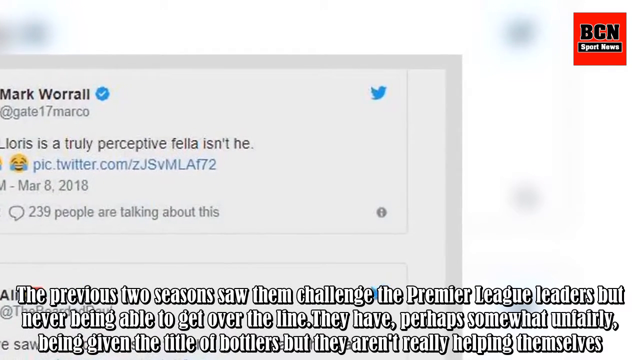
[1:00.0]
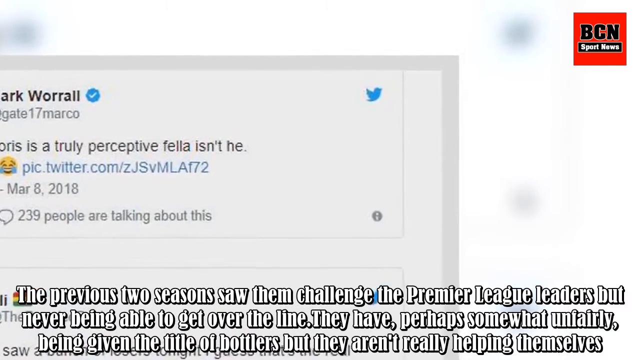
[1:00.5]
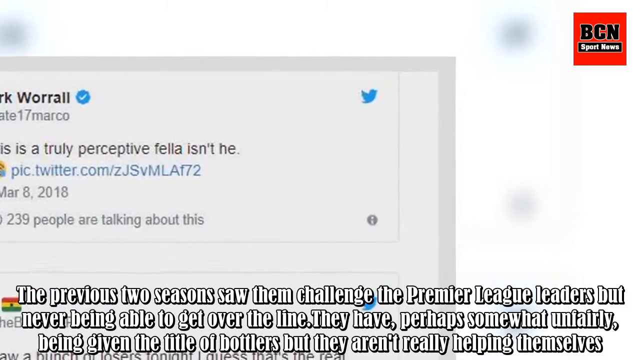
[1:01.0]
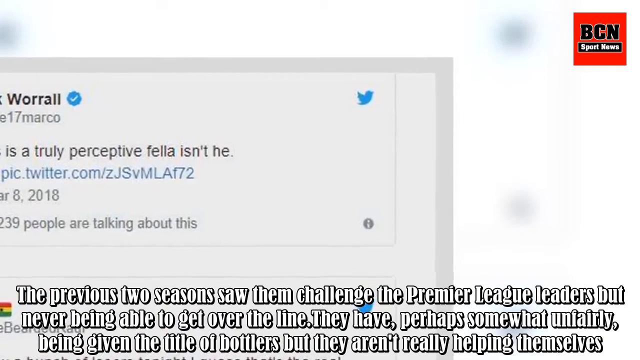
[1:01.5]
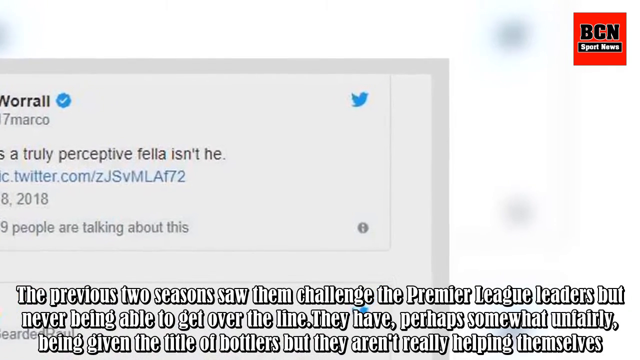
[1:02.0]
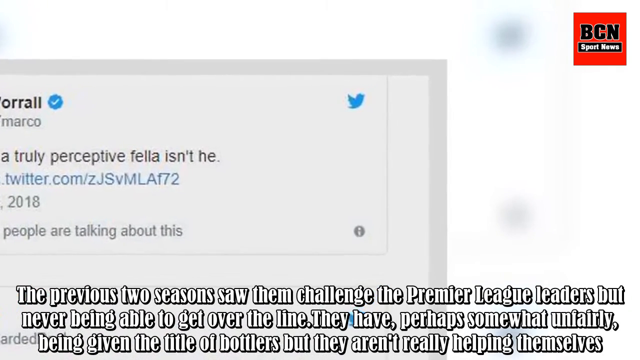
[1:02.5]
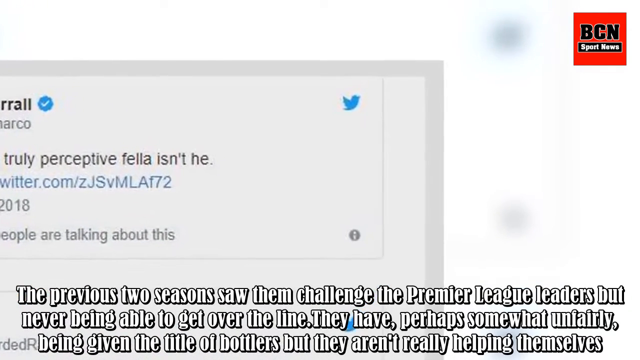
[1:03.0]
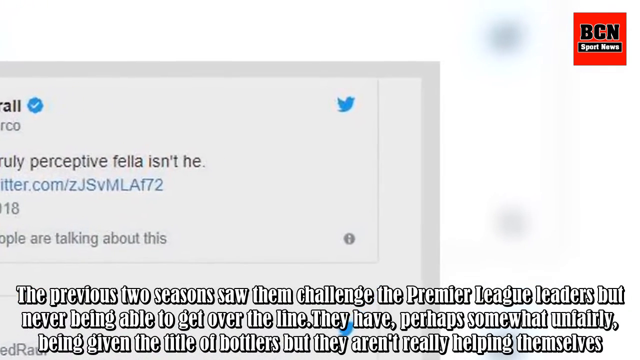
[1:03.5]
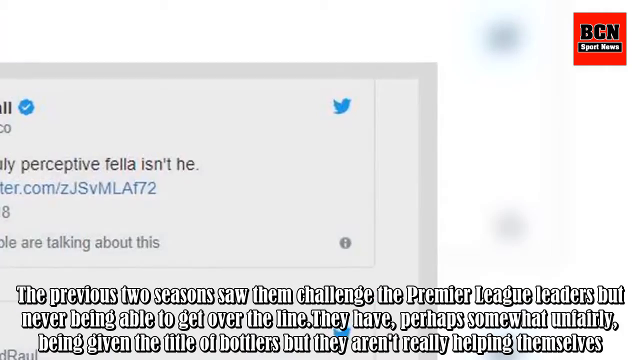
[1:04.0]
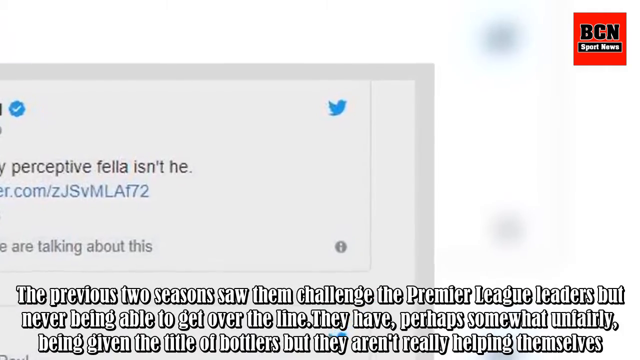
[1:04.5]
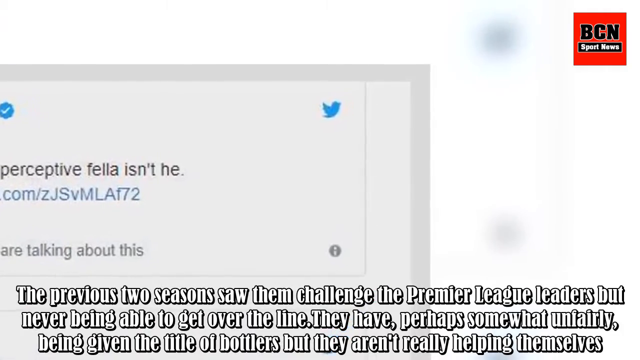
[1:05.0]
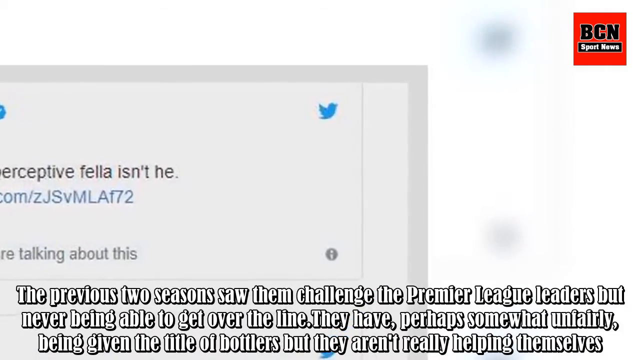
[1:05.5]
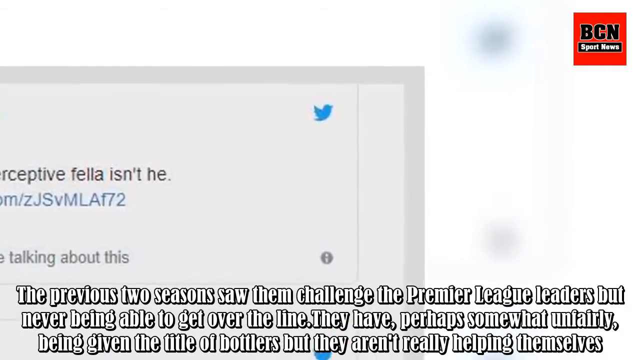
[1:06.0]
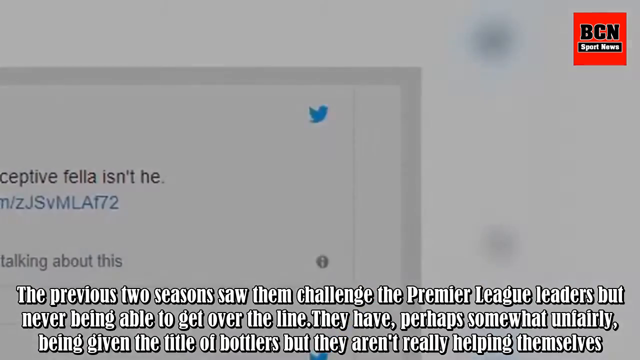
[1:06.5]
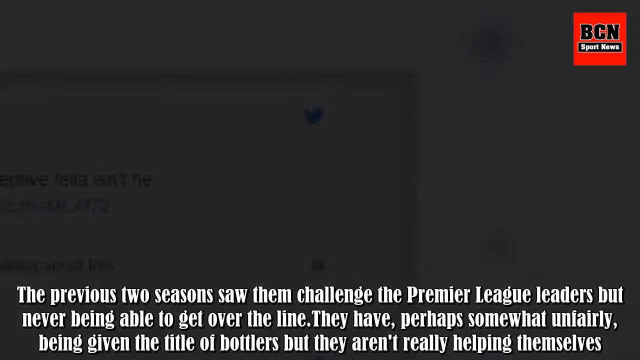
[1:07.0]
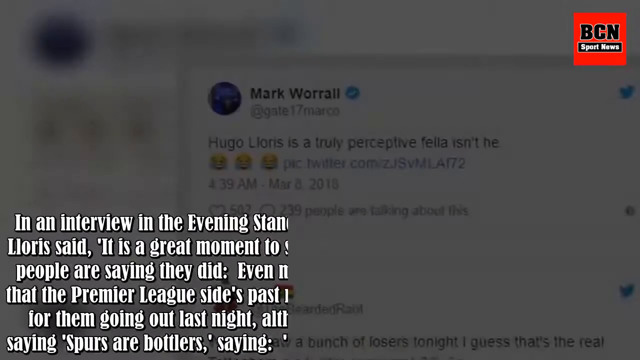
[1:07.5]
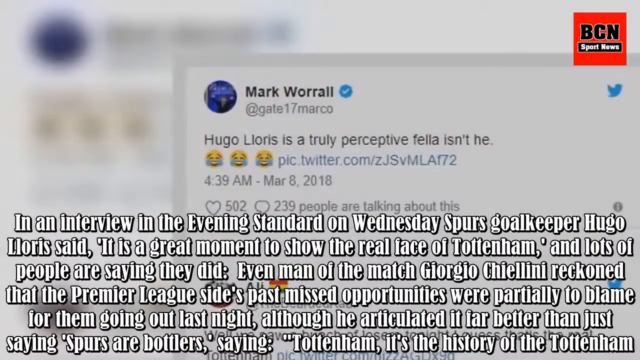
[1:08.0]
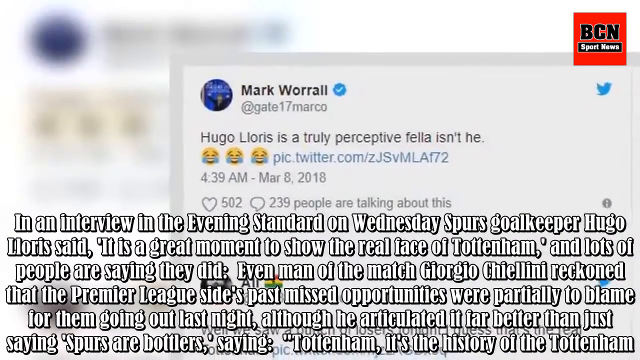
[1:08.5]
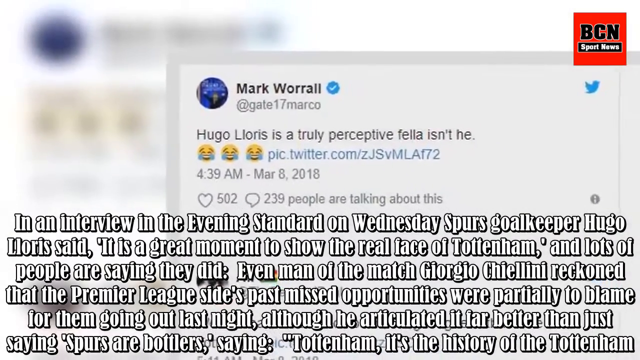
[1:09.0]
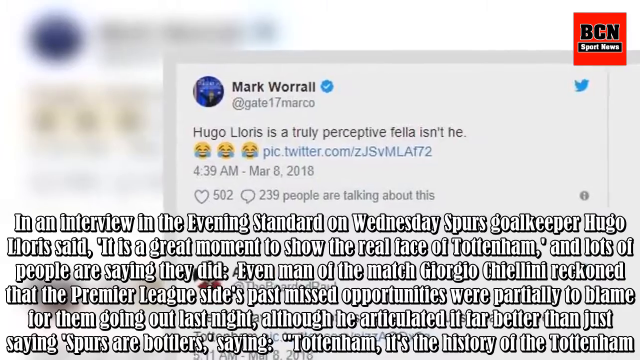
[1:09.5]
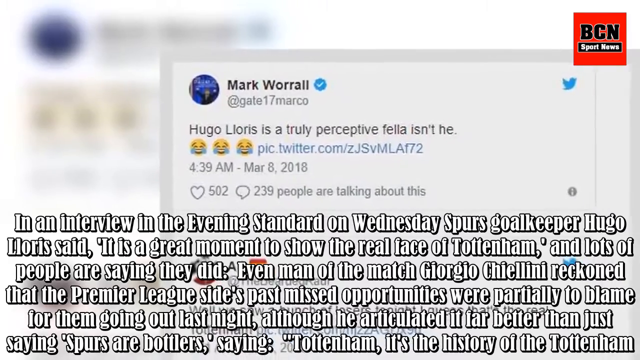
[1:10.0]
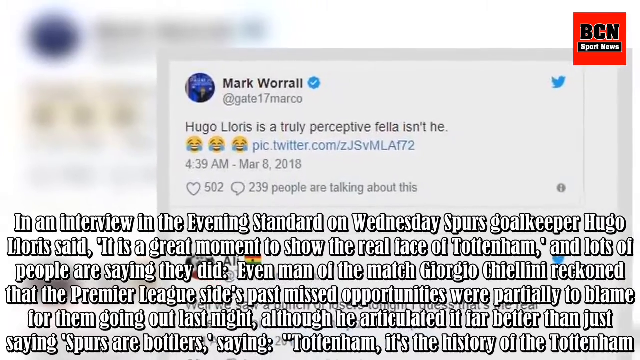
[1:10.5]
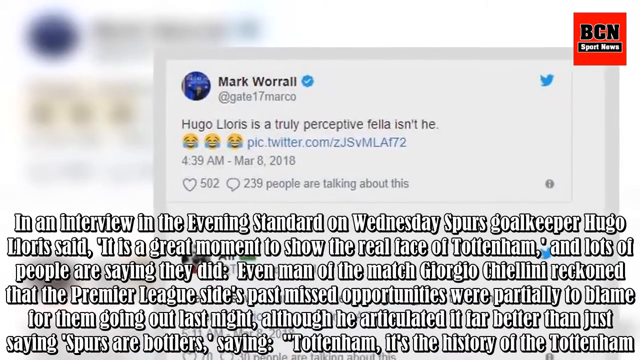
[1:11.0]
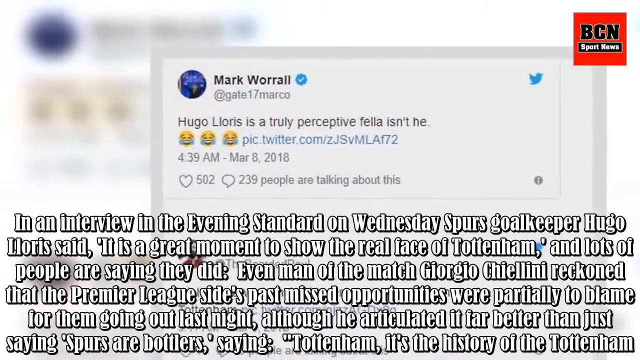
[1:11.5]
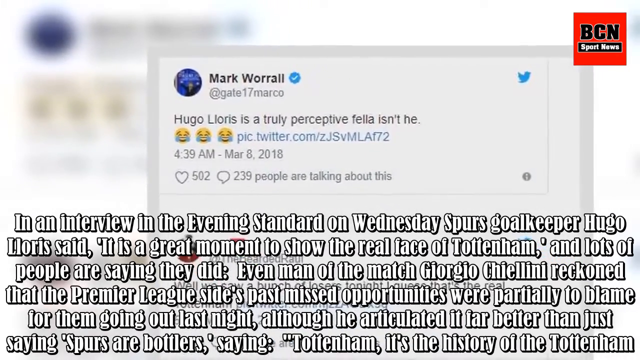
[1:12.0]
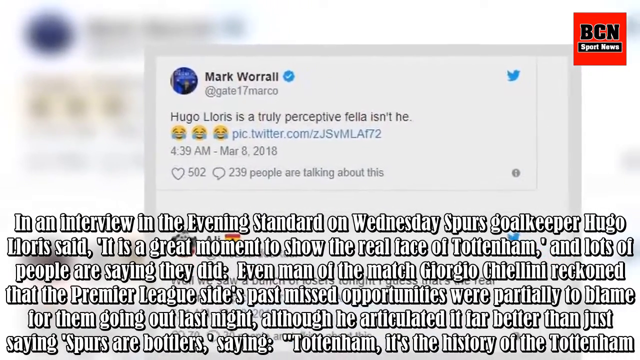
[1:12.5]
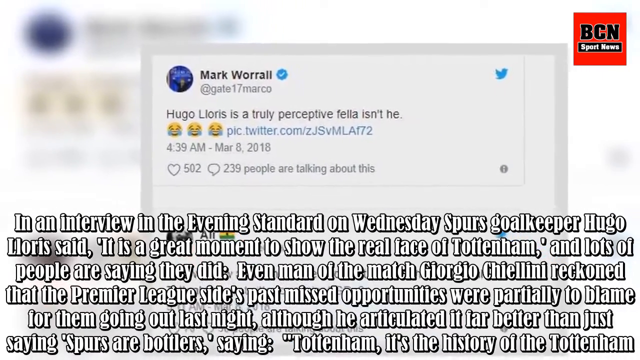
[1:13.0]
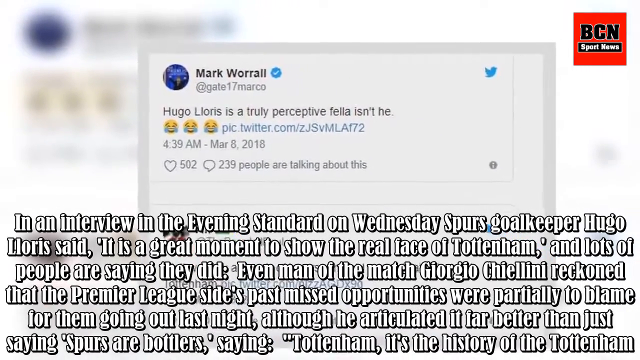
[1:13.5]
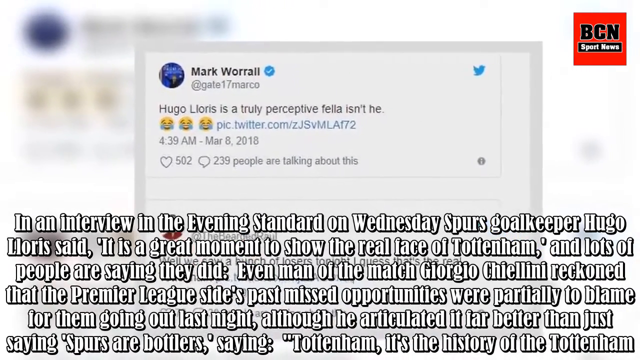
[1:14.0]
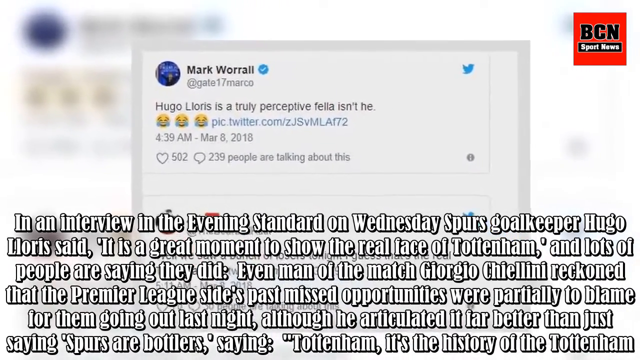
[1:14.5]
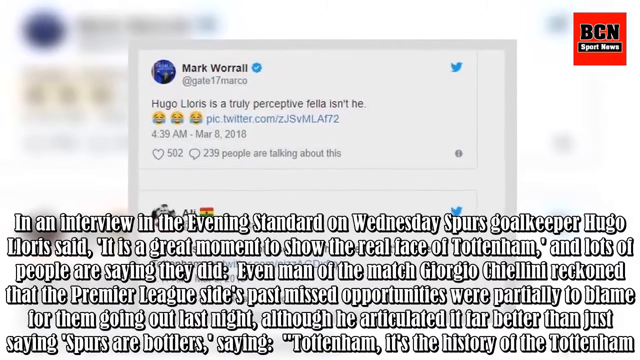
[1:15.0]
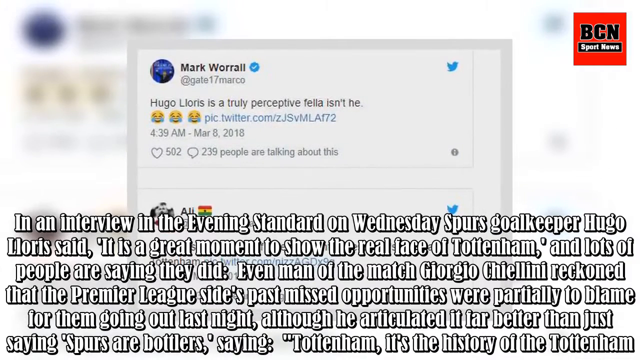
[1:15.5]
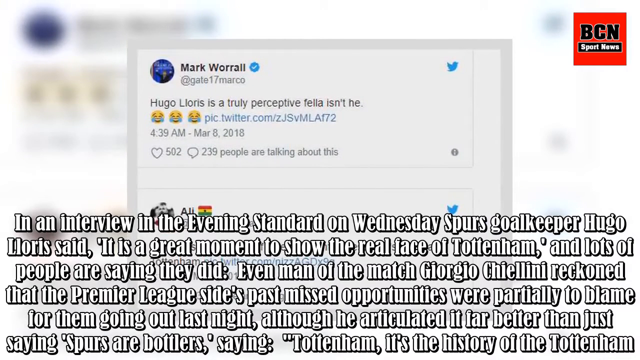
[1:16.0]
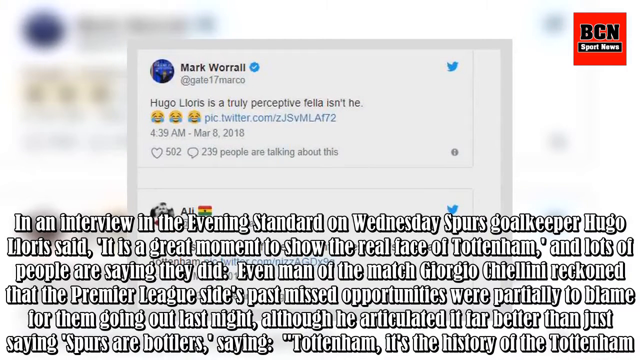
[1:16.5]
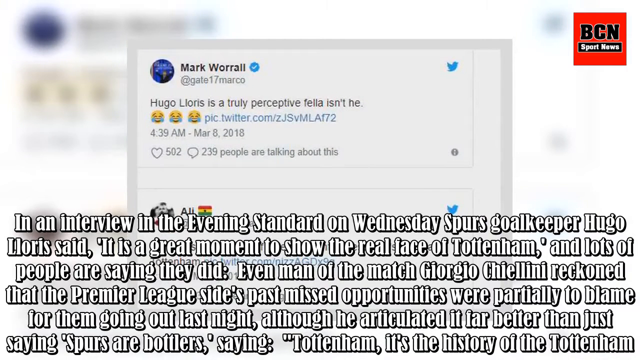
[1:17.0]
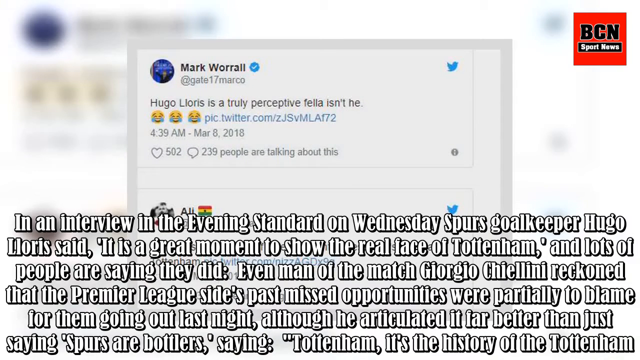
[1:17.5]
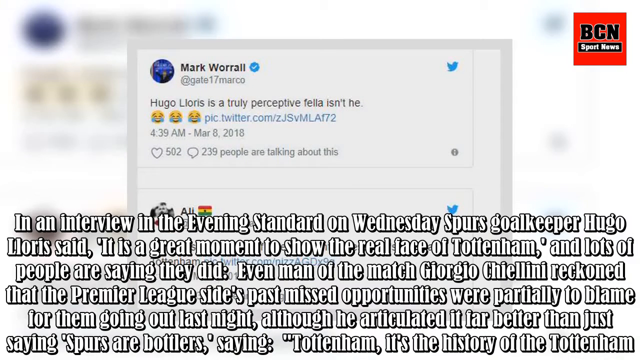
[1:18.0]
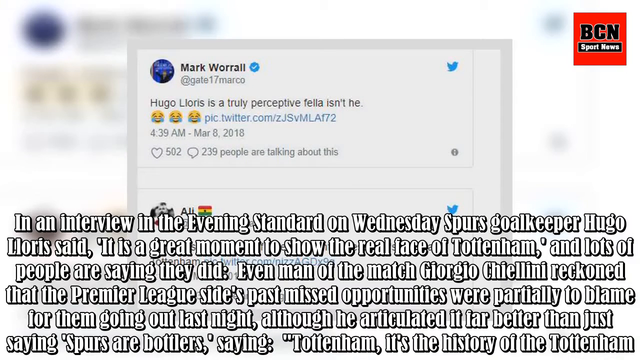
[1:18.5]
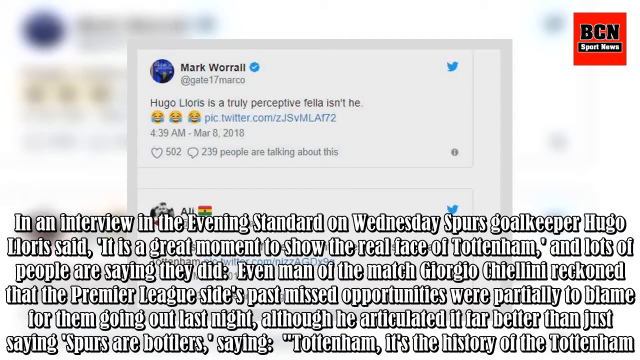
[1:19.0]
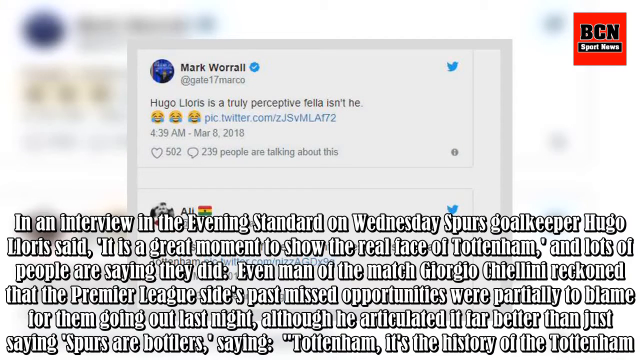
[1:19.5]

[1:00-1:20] The two tweets, very close to the viewer, keep moving to the left side. The scene changes: a large block of captions takes up almost half of the screen at the bottom, while in the background two more tweets by Mark Worrall and Ali move to the left side. The captions read: "in an interview in the Evening Standard on Wednesday, Spurs goalkeeper Hugo Lloris said, it is a great moment to show the real face of Tottenham. And lots of people are saying they did. Even man of the match, Giorgio Chiellini reckoned that the Premier League side's past missed opportunities were partially to blame for them going out last night". The two tweets remain in the background in the center, and a very blurry tweet is in the distance to the left.